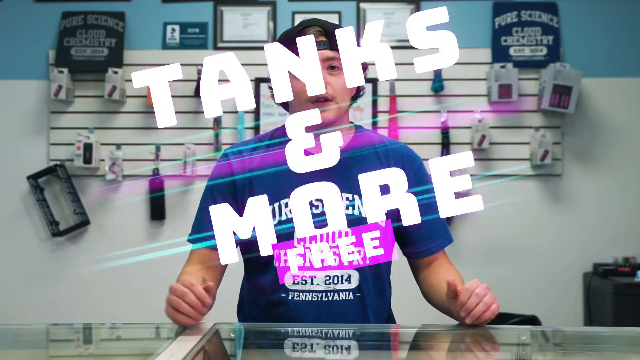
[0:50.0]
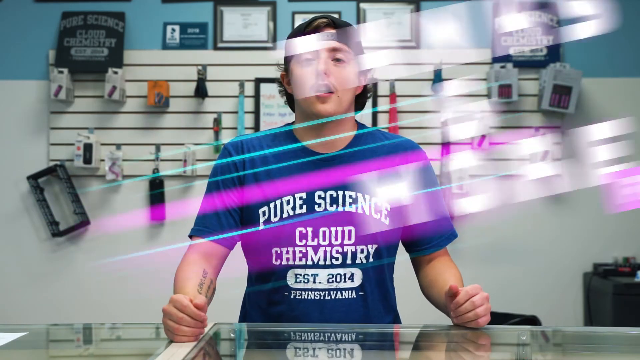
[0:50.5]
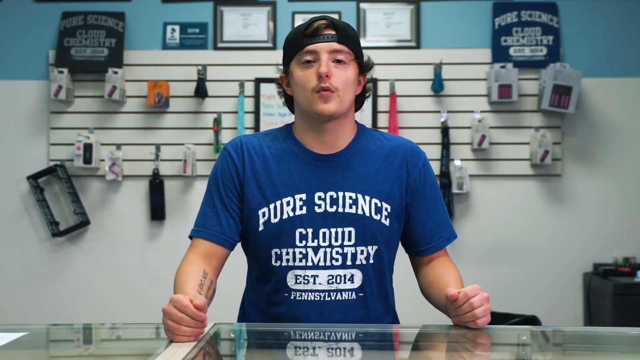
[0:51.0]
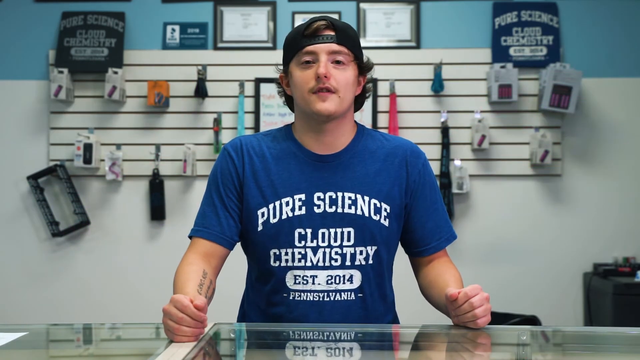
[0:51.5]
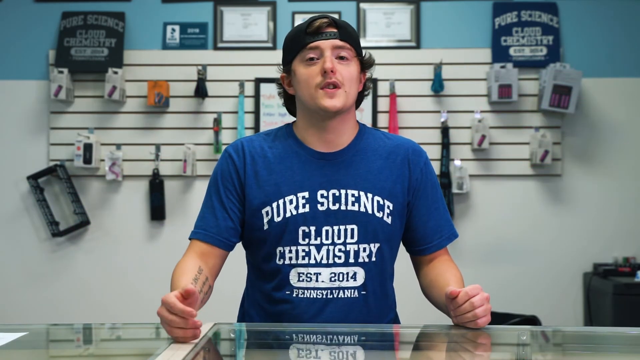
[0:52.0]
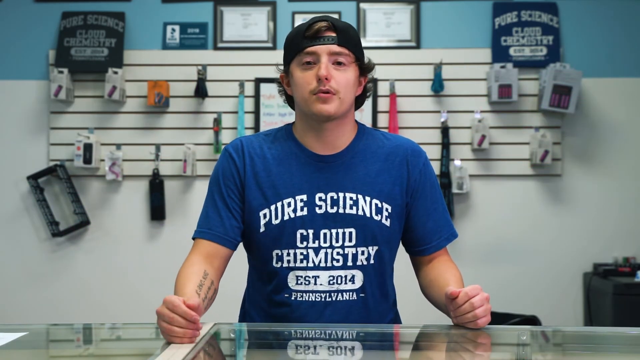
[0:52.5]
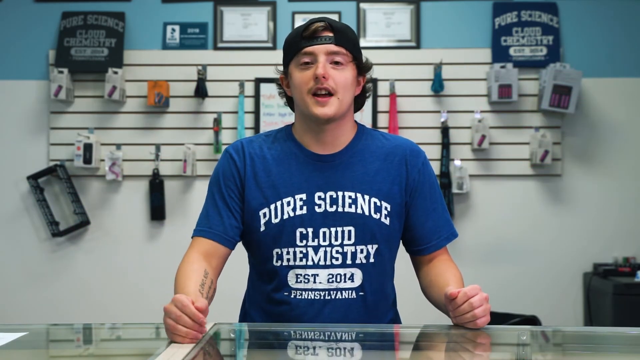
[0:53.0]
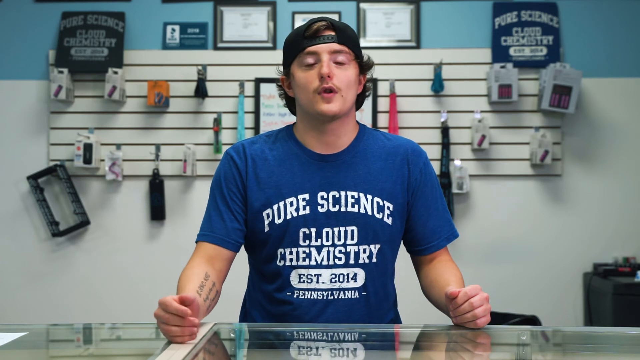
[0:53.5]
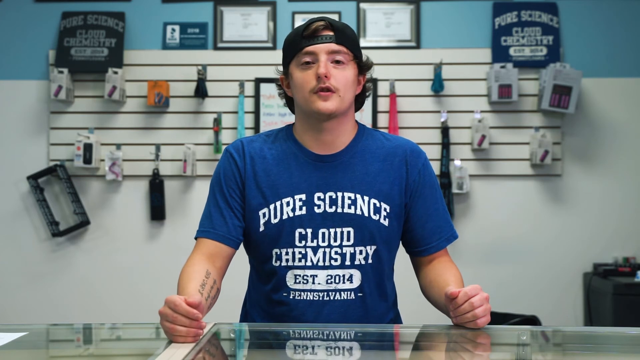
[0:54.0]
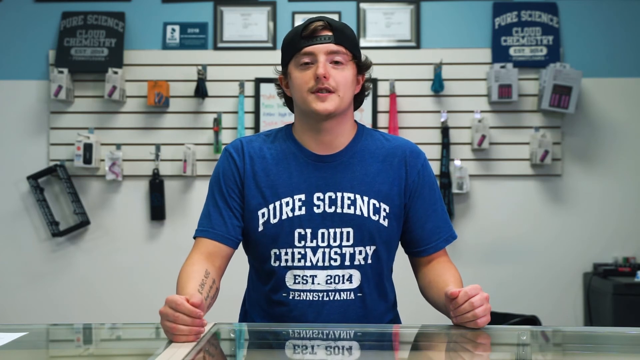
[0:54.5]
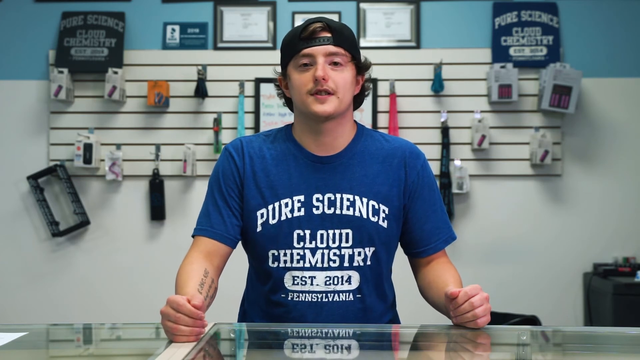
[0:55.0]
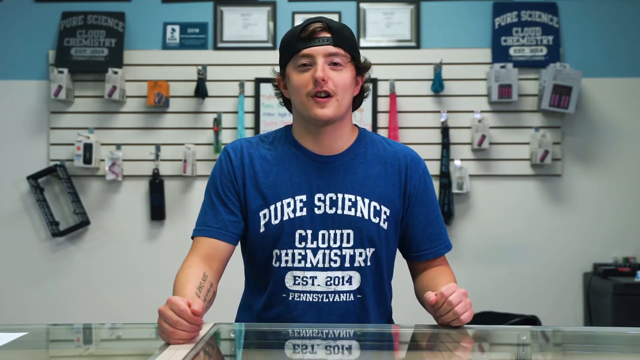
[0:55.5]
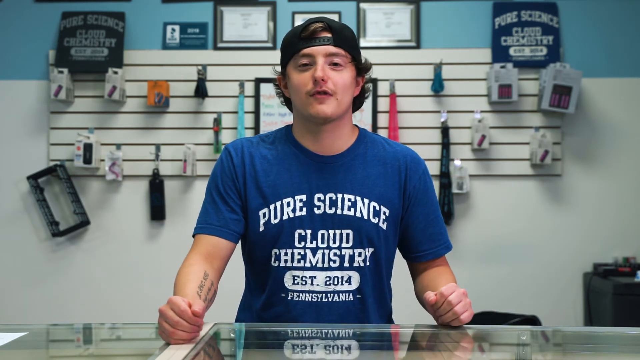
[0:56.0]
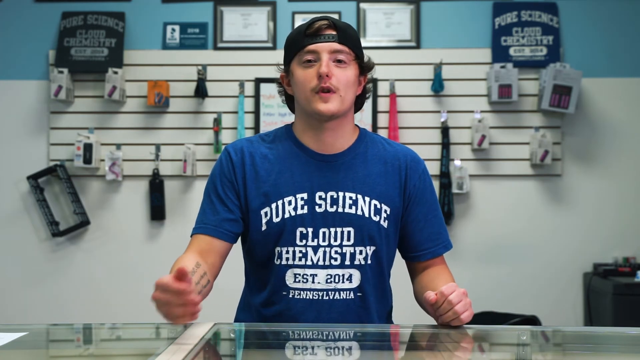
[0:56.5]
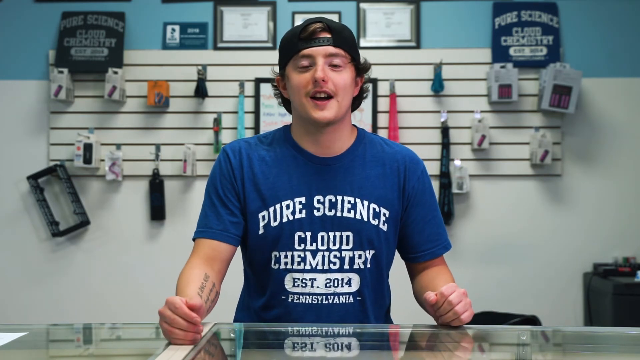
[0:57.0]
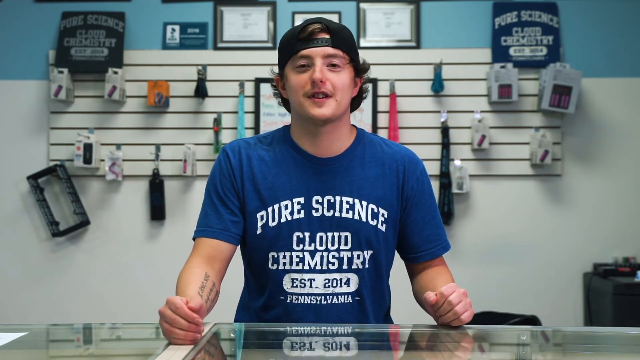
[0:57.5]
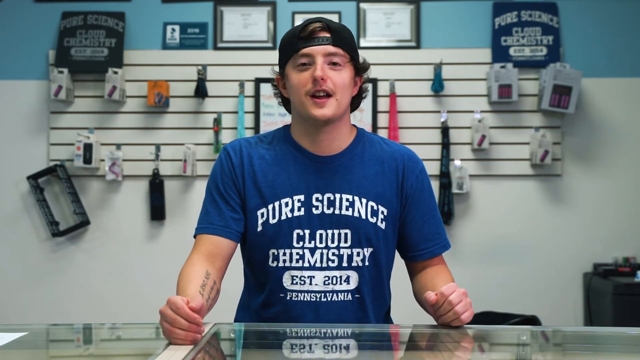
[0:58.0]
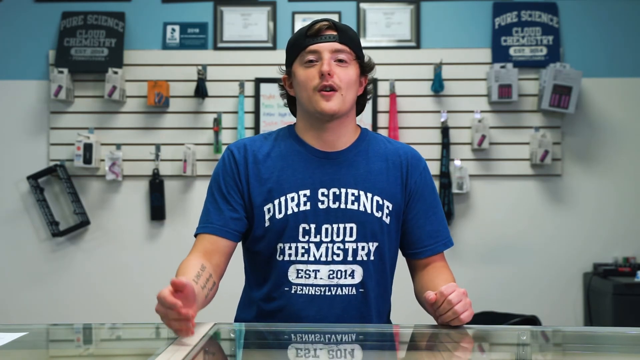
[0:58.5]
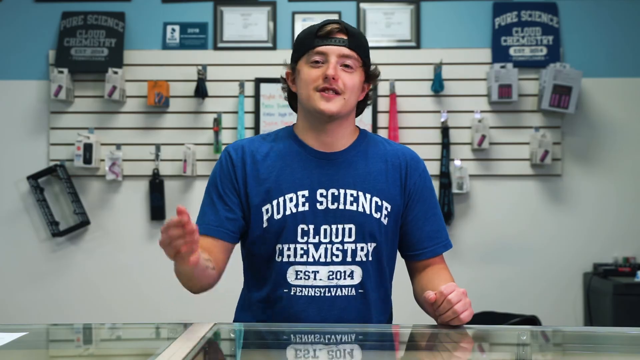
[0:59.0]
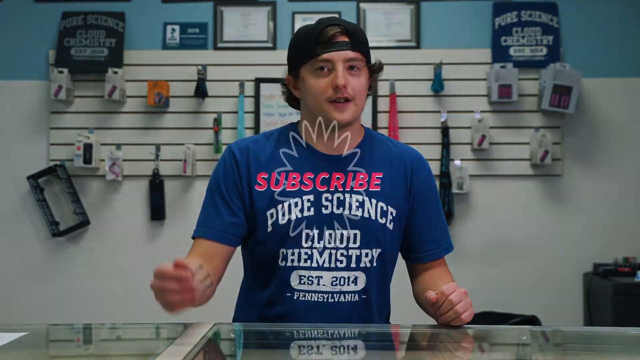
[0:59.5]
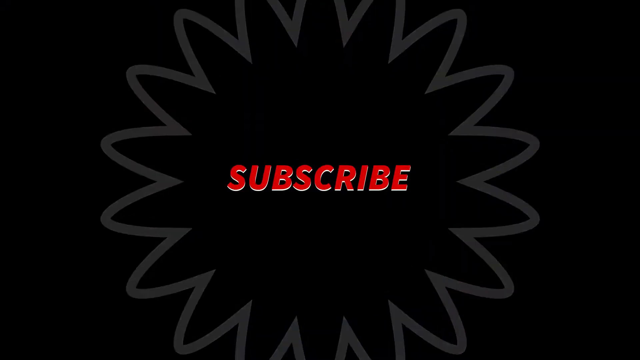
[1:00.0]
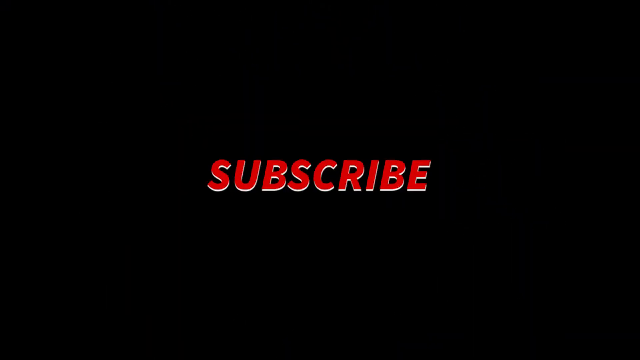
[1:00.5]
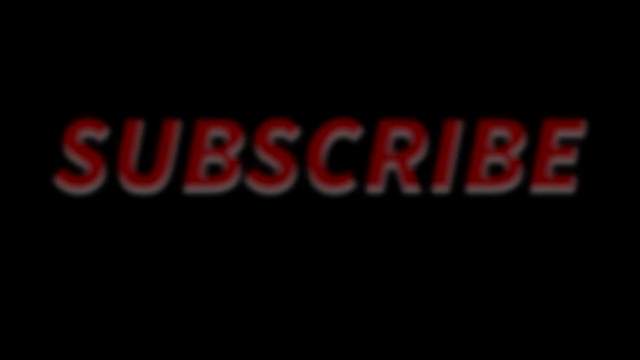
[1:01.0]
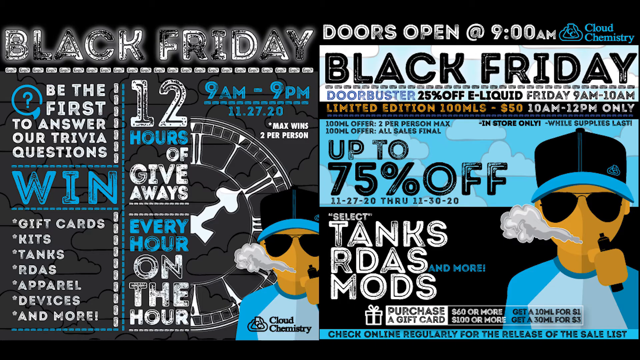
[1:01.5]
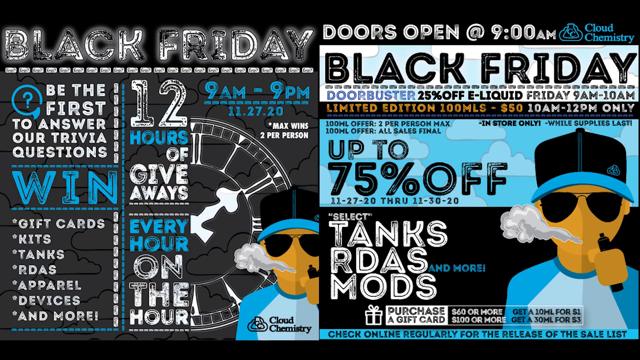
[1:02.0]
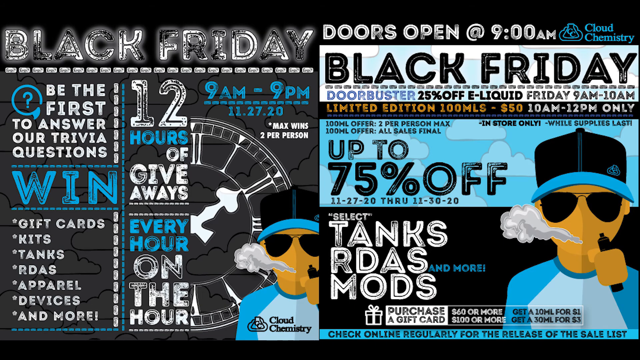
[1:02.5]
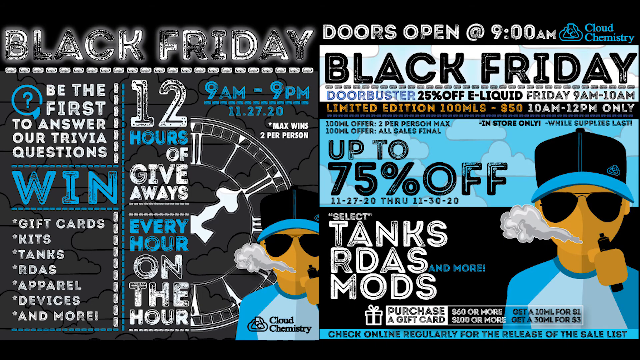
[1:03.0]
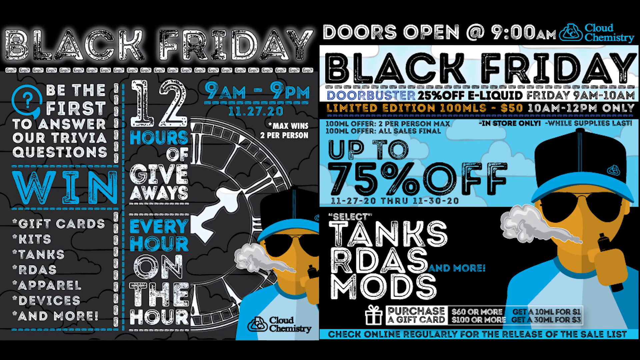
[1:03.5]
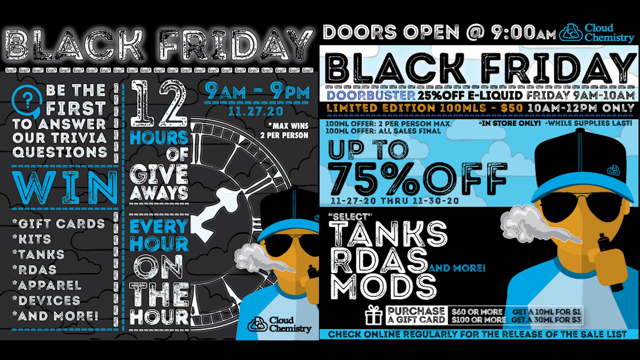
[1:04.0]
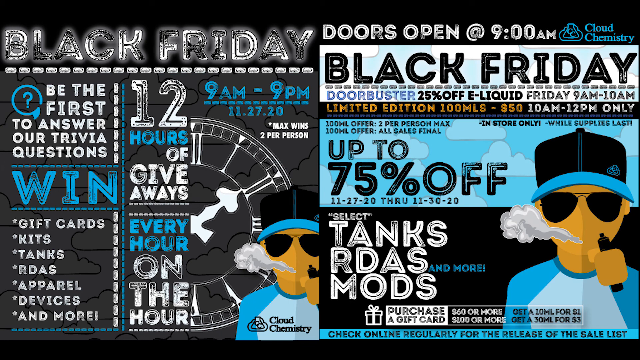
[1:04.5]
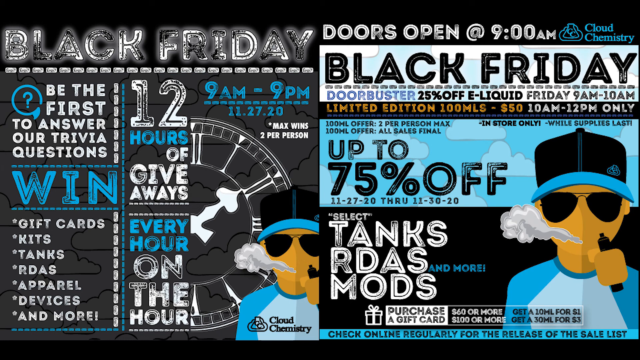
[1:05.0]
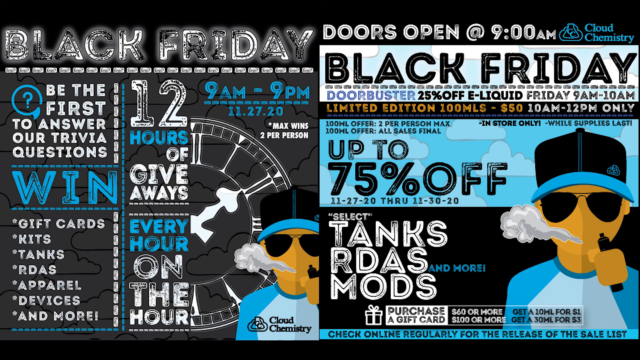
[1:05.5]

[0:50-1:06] Taylor is still standing at his counter in the blue t-shirt with the words "pure science, cloud chemistry, established 2014 Pennsylvania" and his black hat worn backwards, still gesturing a lot with his hands. The background is the same mostly white wall with a little bit of blue at the top, with a lot of pegs holding tools of some sort. After Taylor talks for a while, the Black Friday promotion with the trivia contest appears again: it is black with white text and a little bit of turquoise blue, advertising the same trivia promotion with 12 hours of giveaways. In the bottom right-hand corner is a man who might be a little cartoon of Taylor. He wears a black hat with a turquoise brim, sunglasses, and a turquoise and white baseball t-shirt, has no nose or mouth, and by the looks of it is smoking something. Next comes a black screen with the word "subscribe" outlined in a wavy white circle.